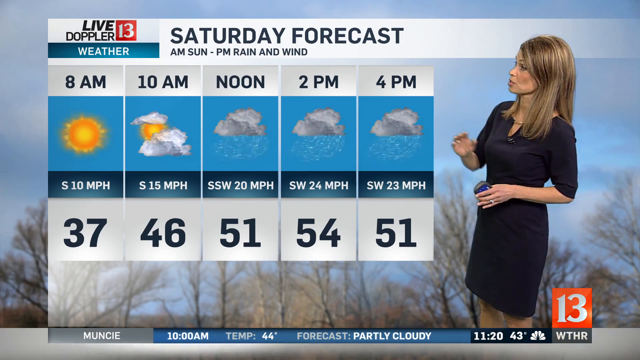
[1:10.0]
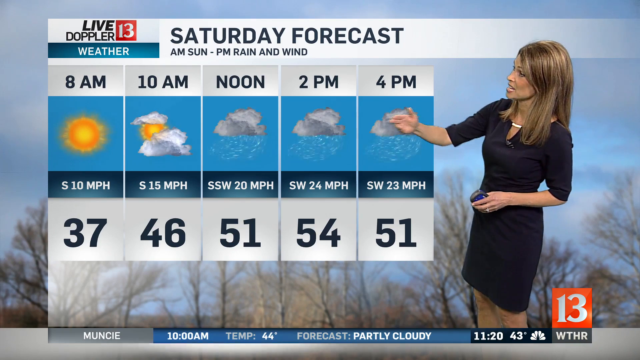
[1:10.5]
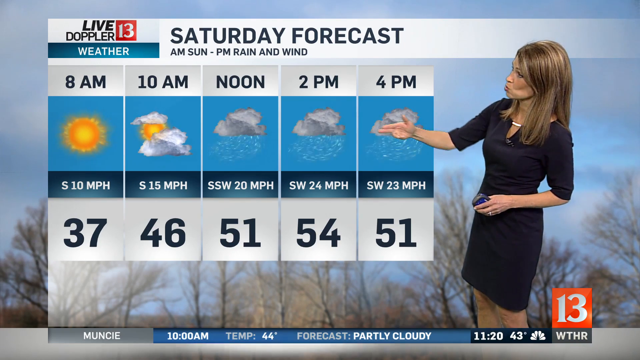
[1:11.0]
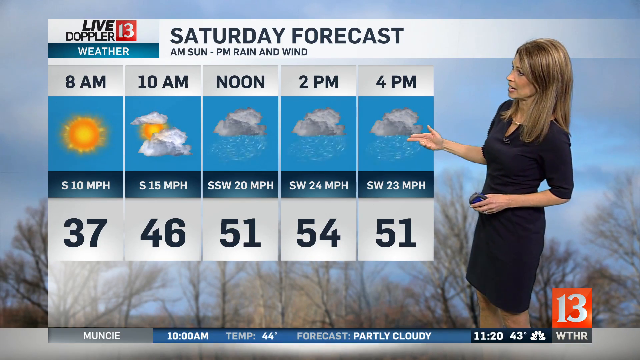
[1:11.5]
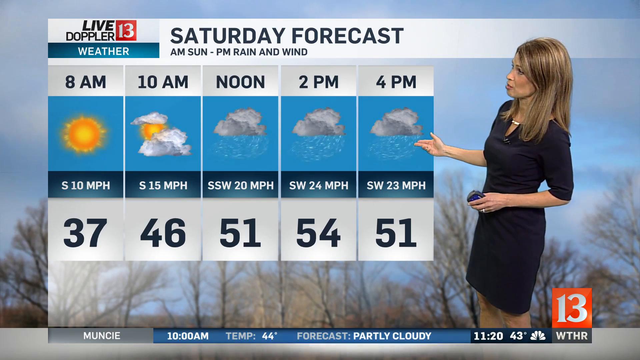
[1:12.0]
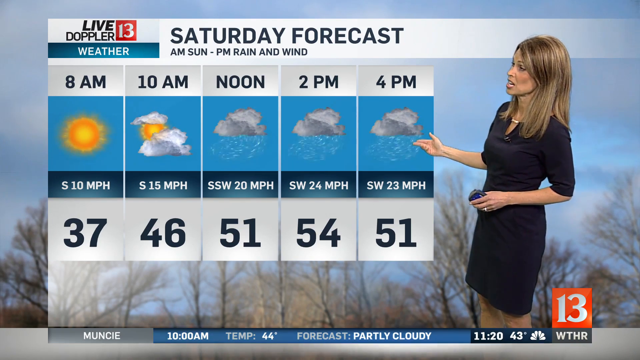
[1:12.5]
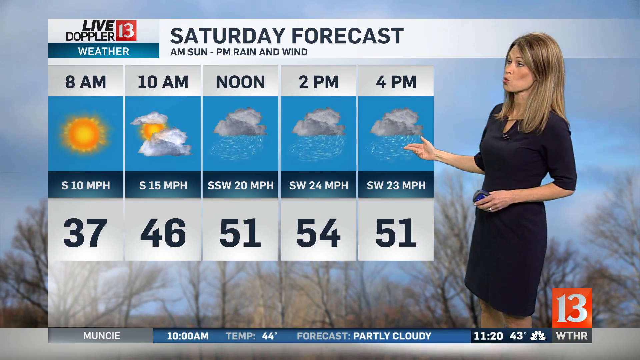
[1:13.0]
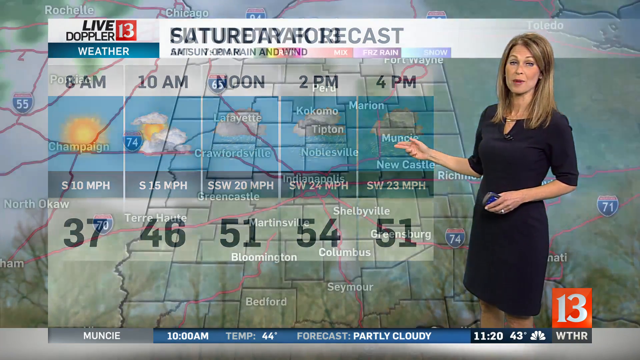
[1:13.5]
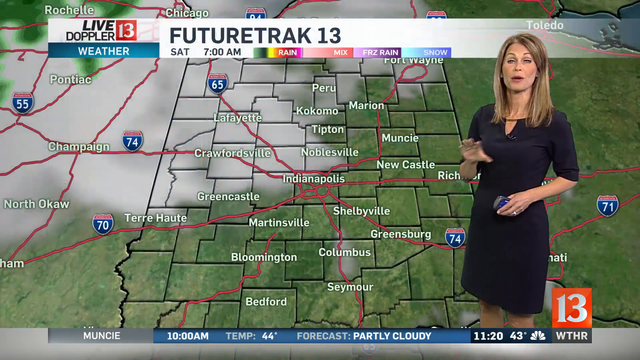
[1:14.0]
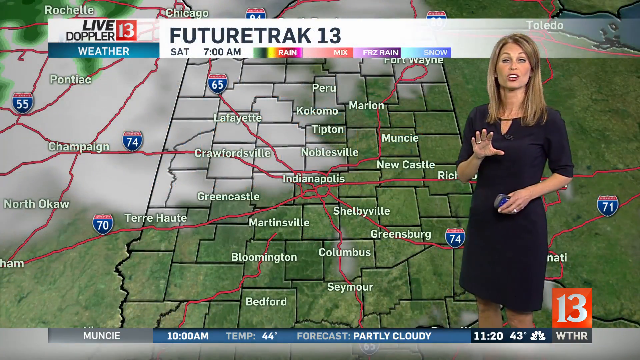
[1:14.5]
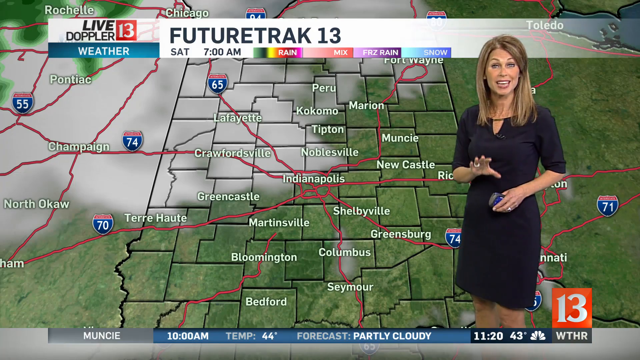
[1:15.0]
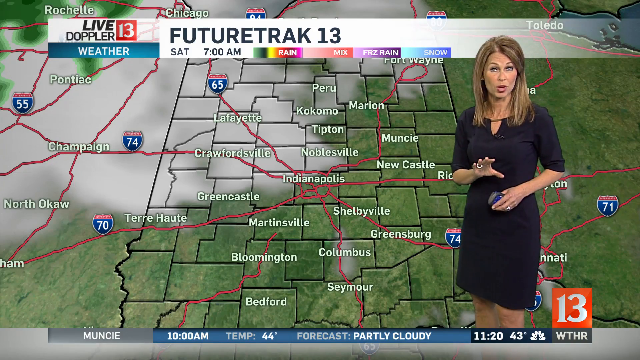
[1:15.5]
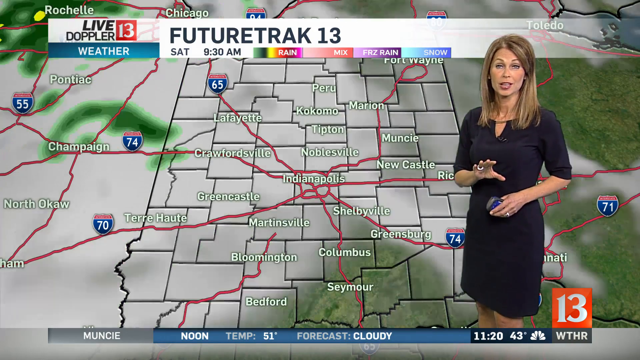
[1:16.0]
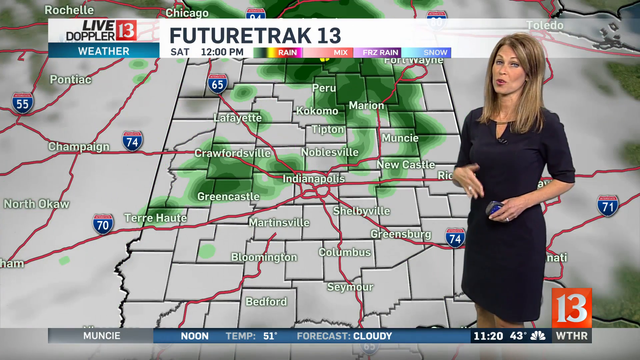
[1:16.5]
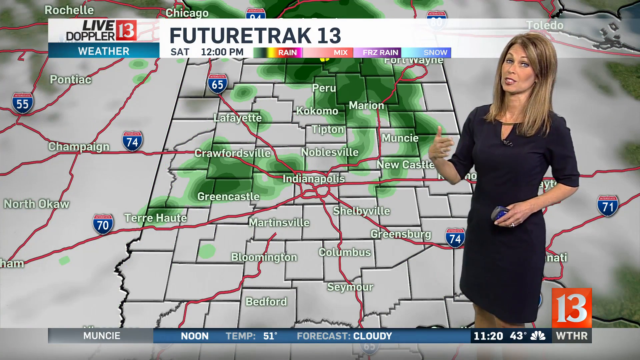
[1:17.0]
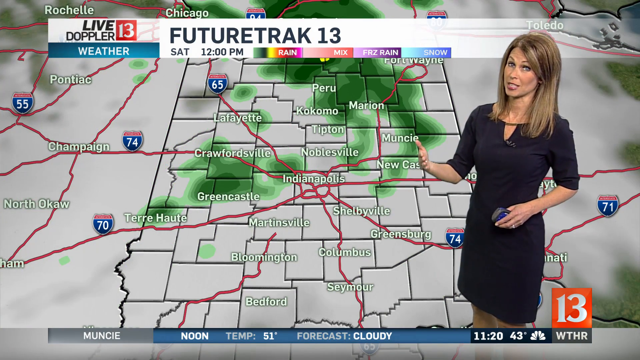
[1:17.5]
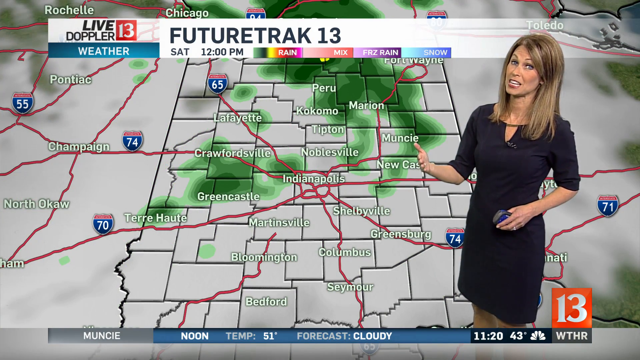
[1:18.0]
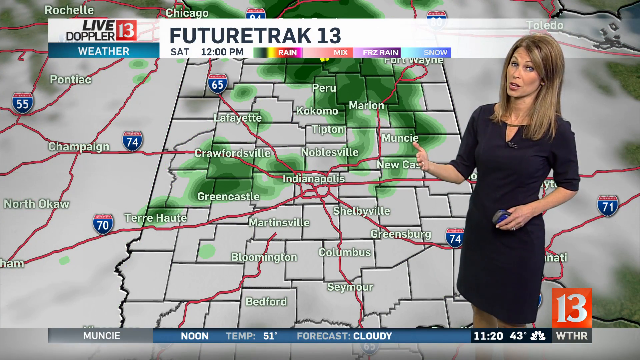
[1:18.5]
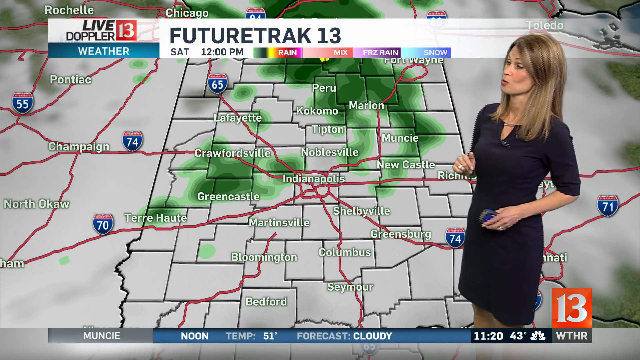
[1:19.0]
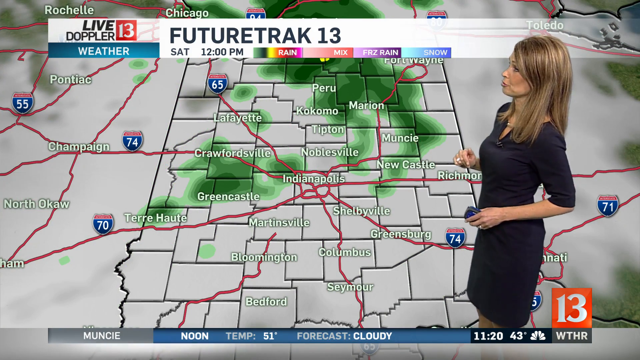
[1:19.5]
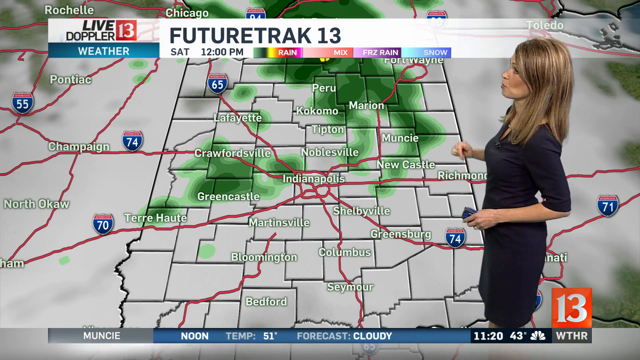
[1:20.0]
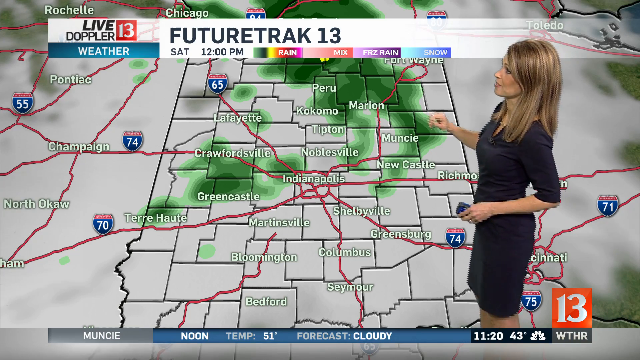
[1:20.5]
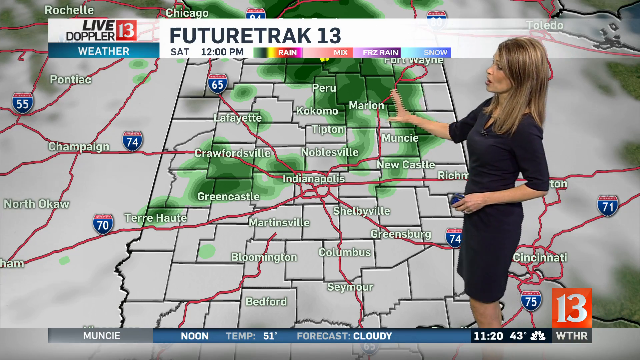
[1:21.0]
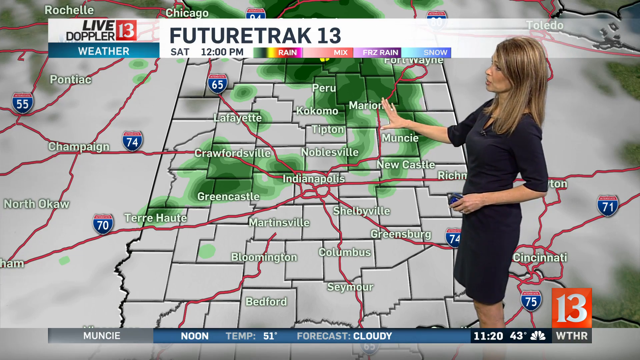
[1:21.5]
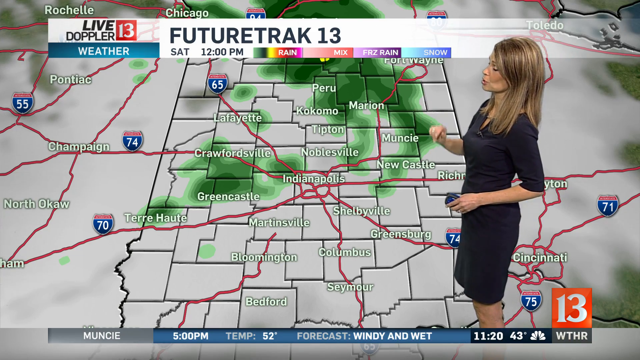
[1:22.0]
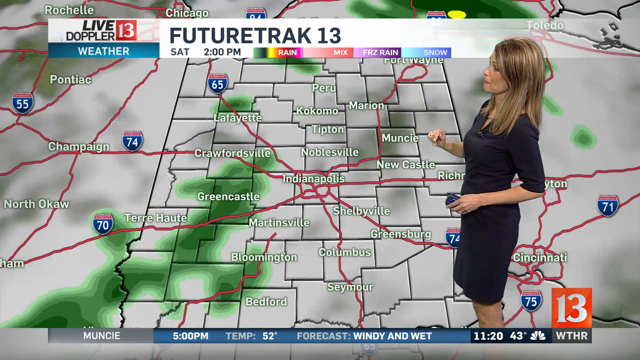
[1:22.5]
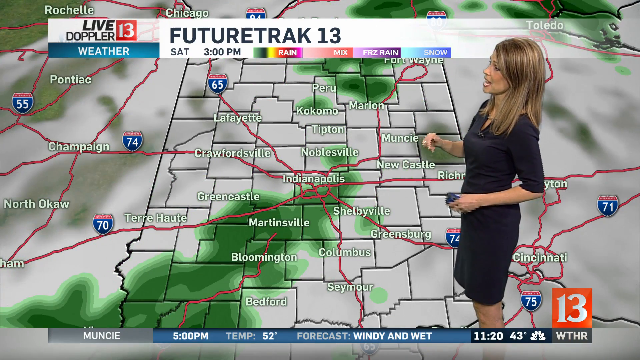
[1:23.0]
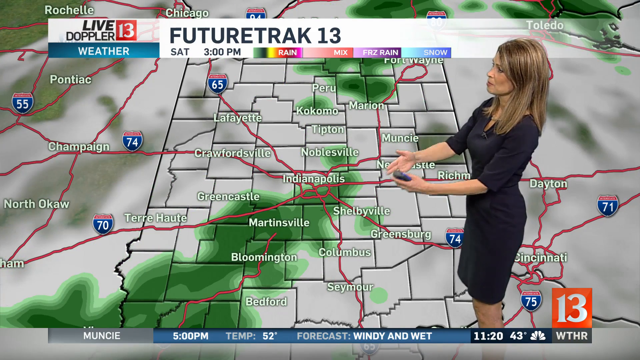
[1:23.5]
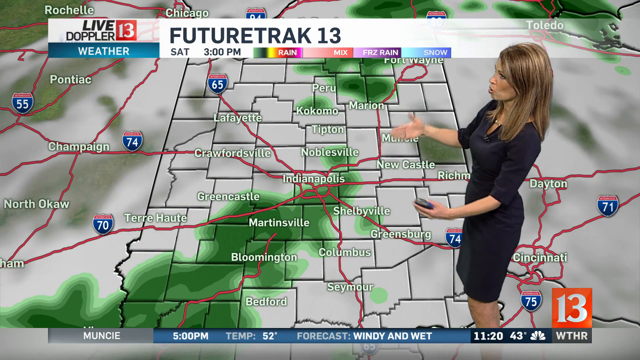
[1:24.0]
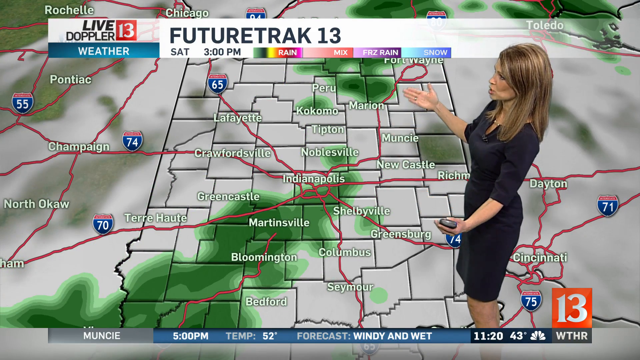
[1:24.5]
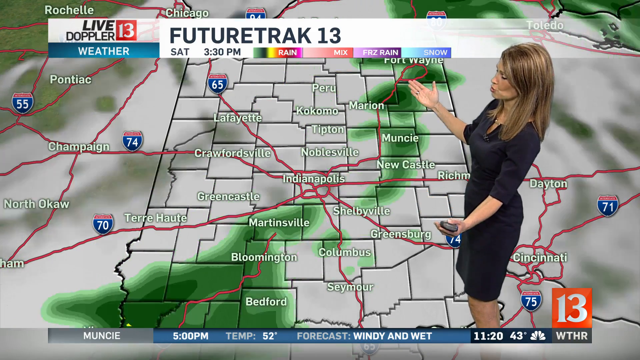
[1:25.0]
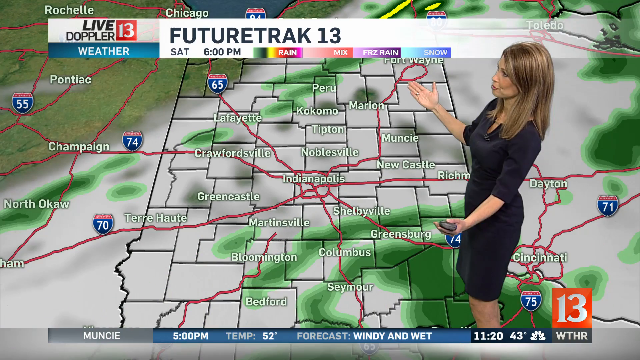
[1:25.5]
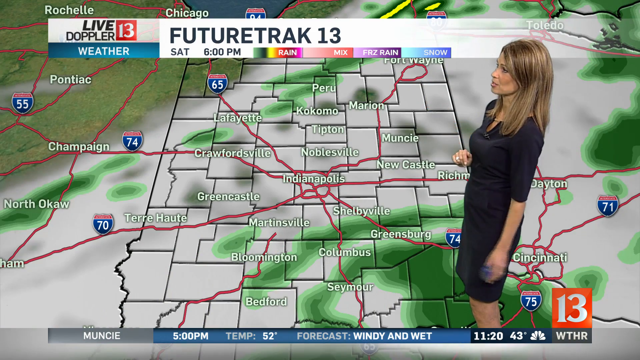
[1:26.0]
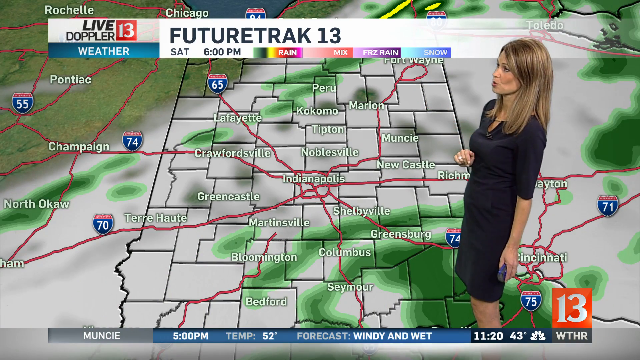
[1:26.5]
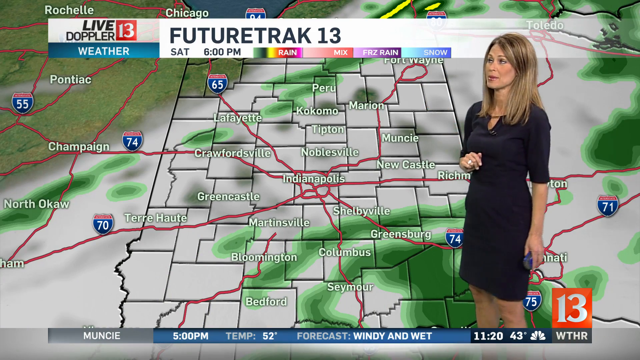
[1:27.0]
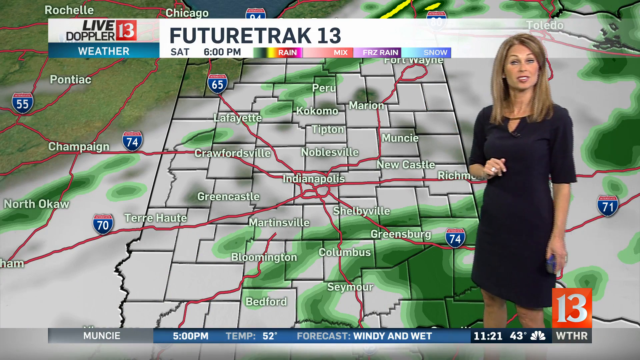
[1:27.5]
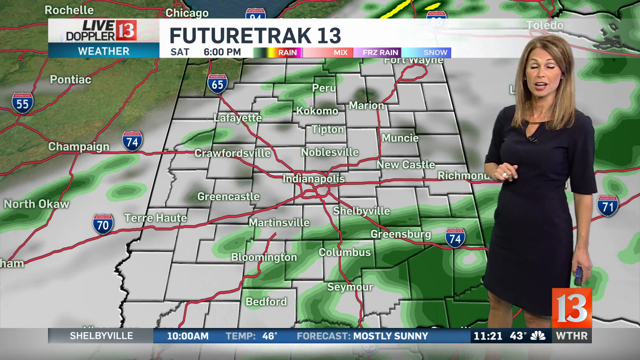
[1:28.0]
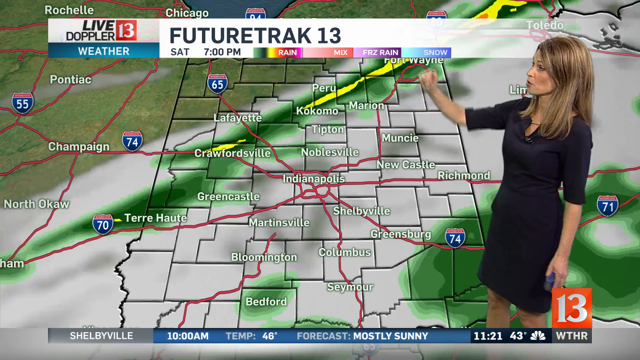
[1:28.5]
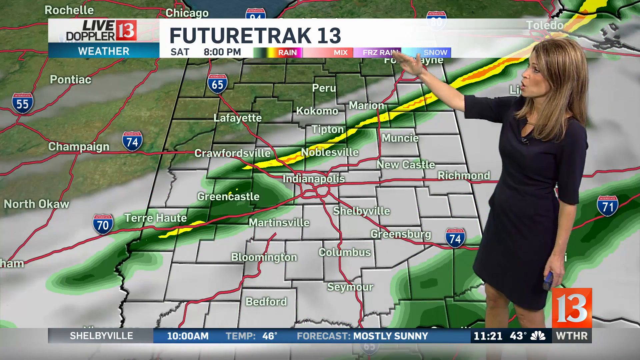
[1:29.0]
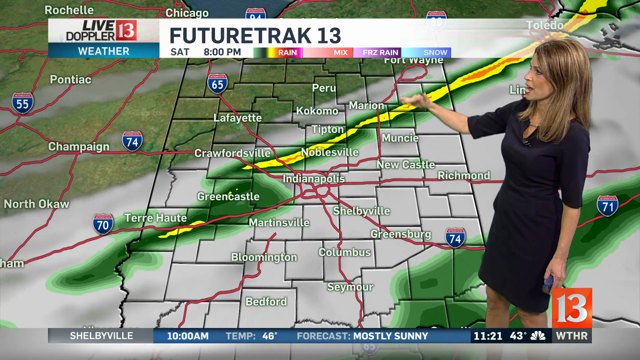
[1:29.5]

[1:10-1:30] The Saturday forecast screen reads "a.m. Sunday to p.m. rain and wind", with the times 8 a.m., 10 a.m., noon, 2 p.m. and 4 p.m.: S 10 MPH at 87 degrees for 8 a.m., S 15 MPH at 46 degrees for 10 a.m., SSW 20 MPH at 51 degrees for noon, SW 24 MPH at 54 degrees for 2 p.m. and SW 23 MPH at 51 degrees for 4 p.m. The news reporter then moves to a different screen showing futuretrak for Saturday 7 a.m., with areas such as Indianapolis, Greencastle and Bloomington and something white, possibly winds moving in and spreading across these areas. The news reporter points at some of the areas.